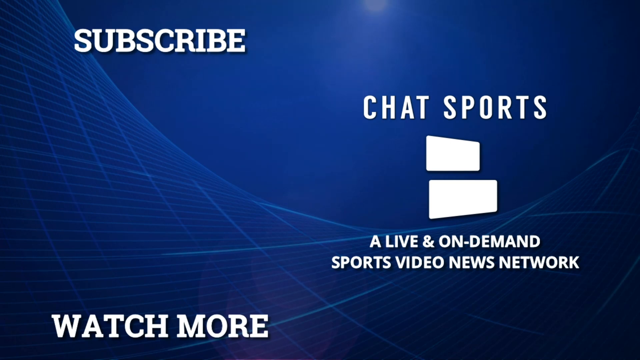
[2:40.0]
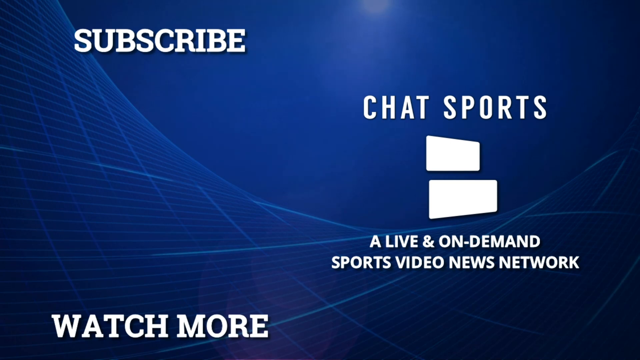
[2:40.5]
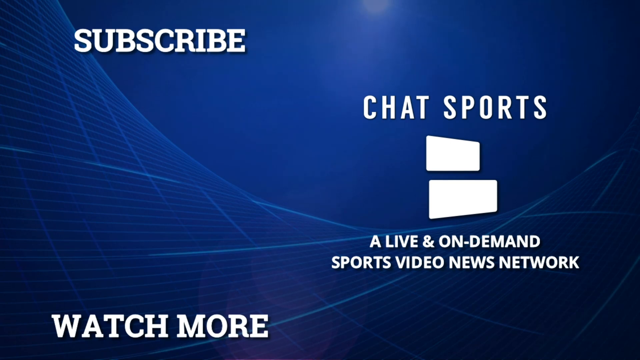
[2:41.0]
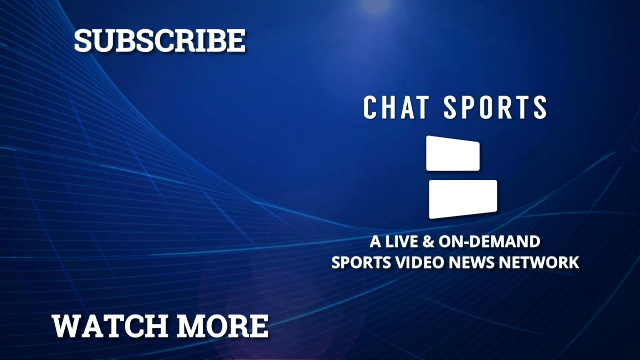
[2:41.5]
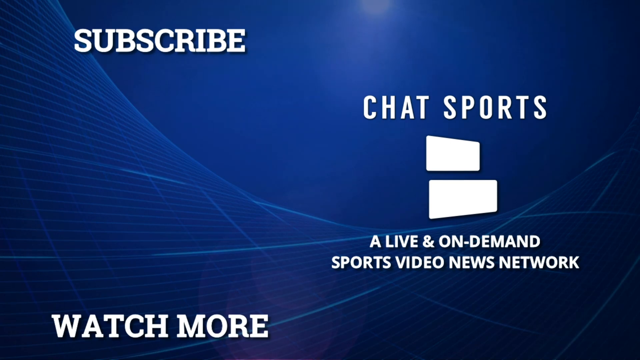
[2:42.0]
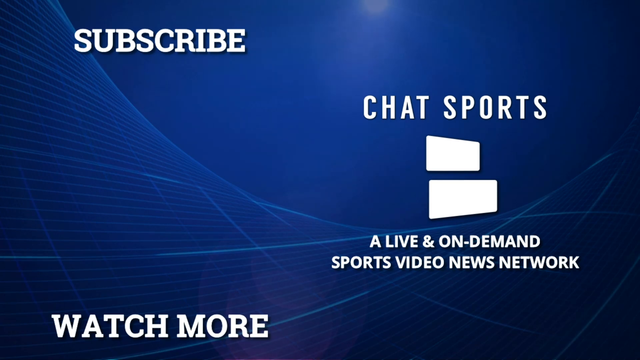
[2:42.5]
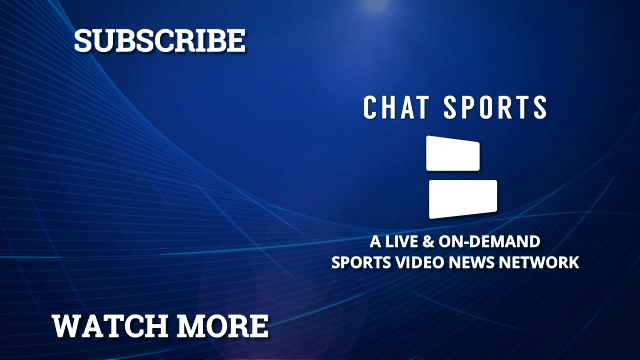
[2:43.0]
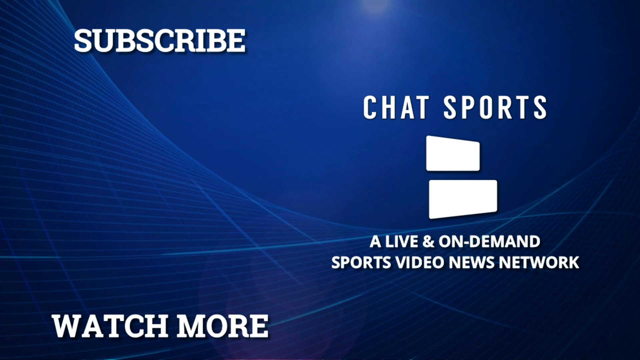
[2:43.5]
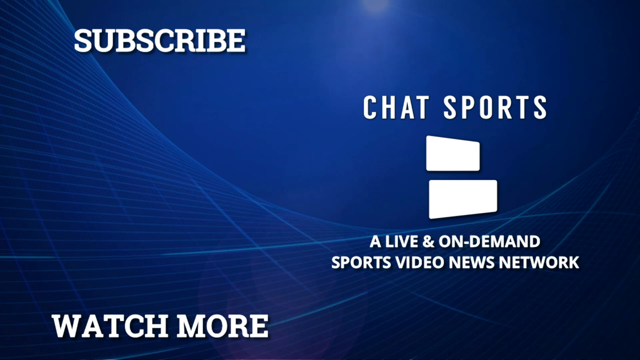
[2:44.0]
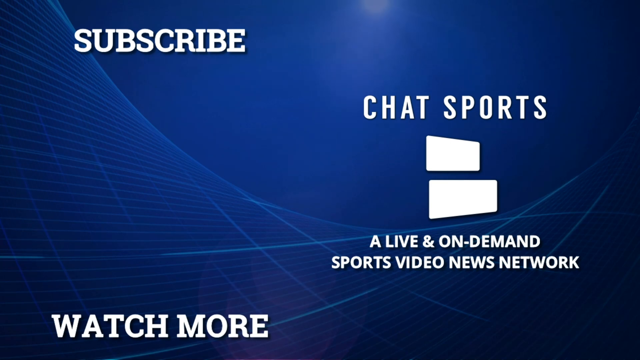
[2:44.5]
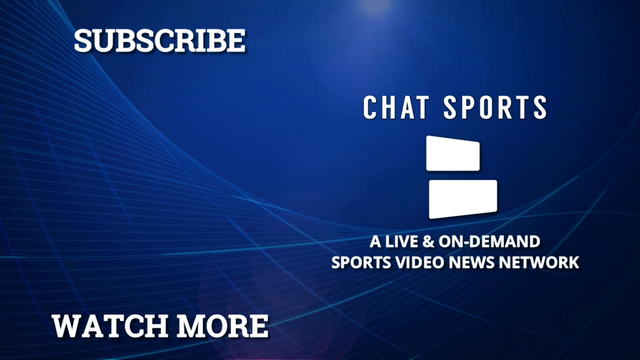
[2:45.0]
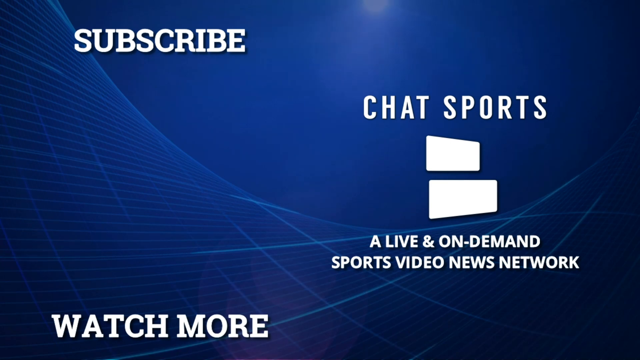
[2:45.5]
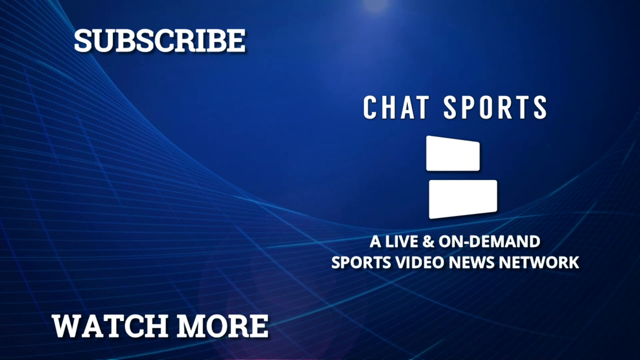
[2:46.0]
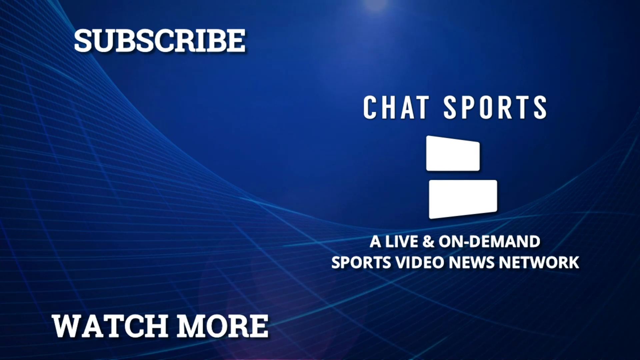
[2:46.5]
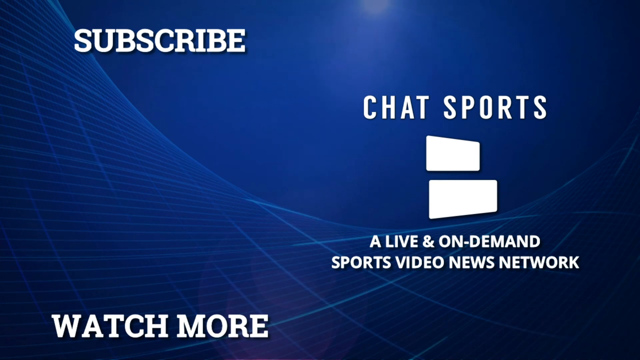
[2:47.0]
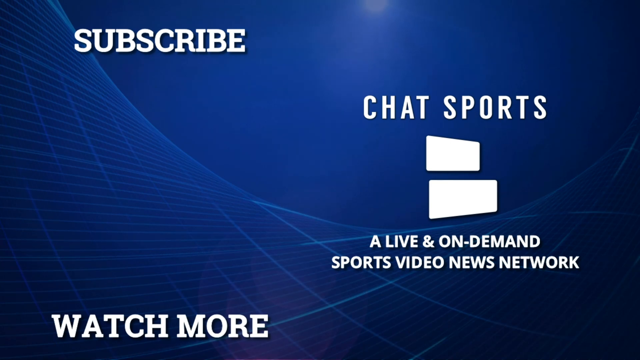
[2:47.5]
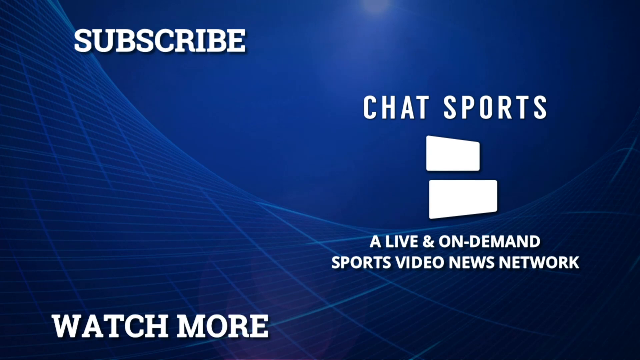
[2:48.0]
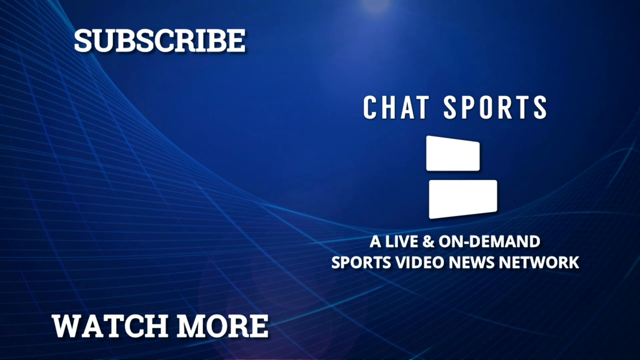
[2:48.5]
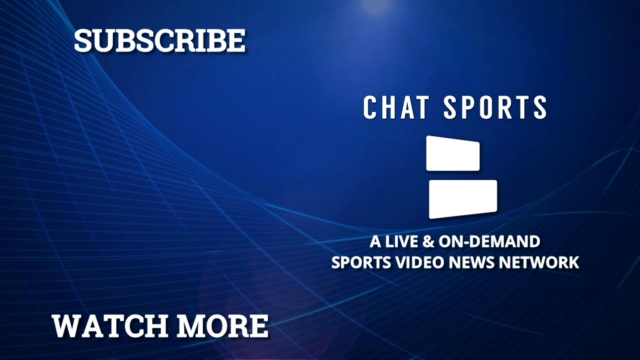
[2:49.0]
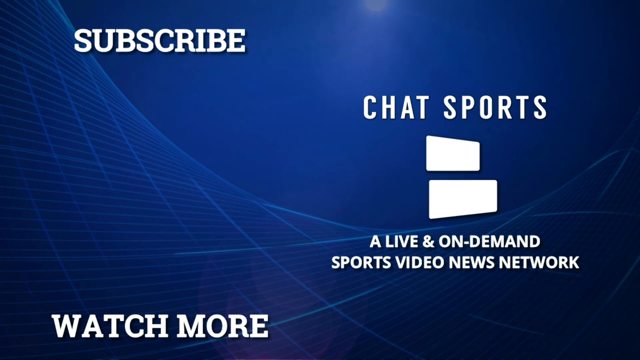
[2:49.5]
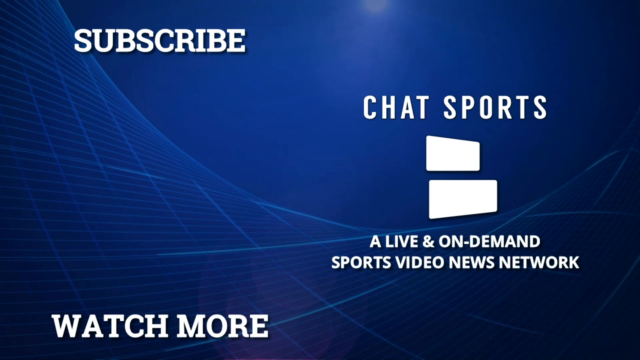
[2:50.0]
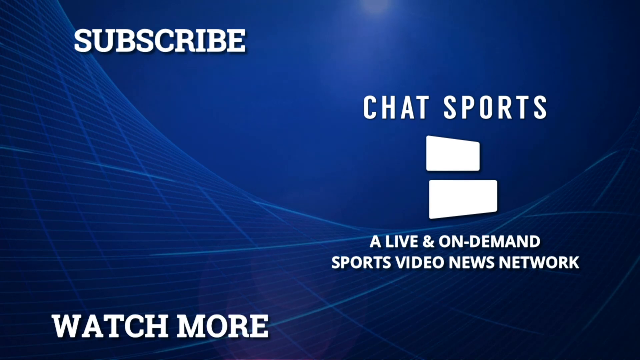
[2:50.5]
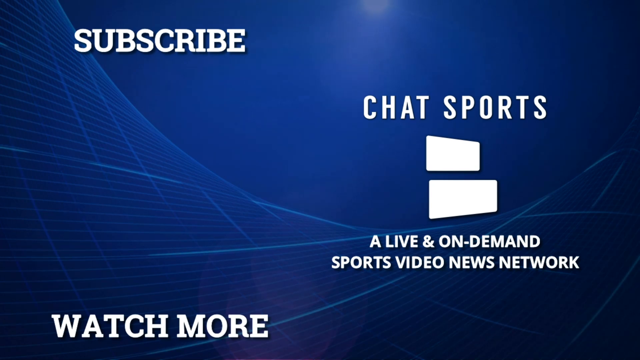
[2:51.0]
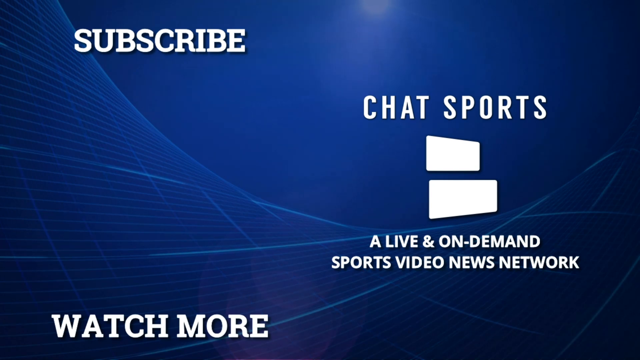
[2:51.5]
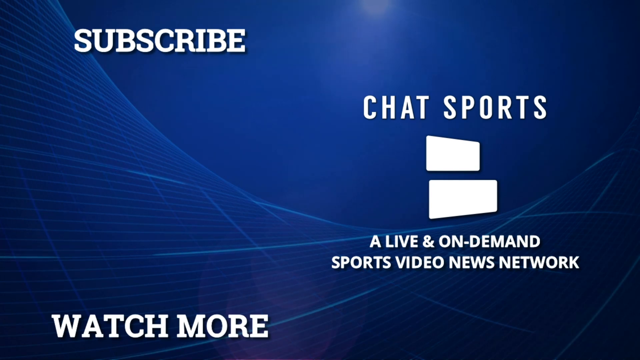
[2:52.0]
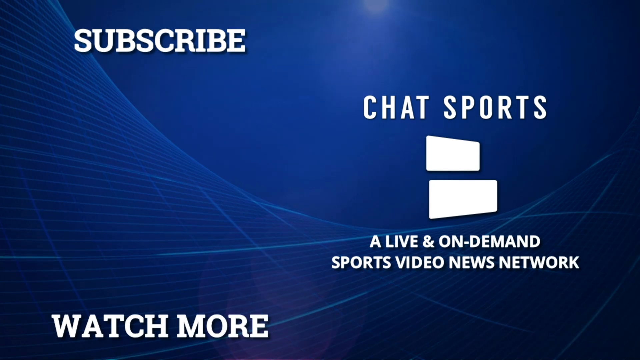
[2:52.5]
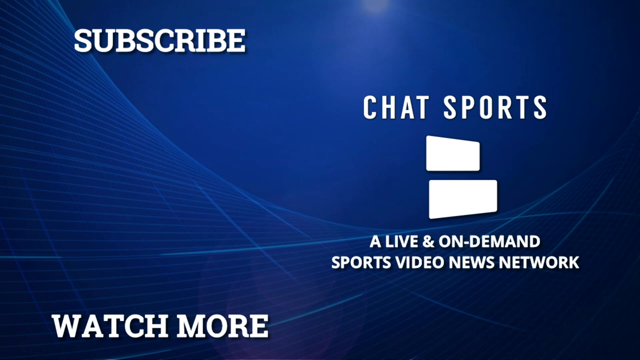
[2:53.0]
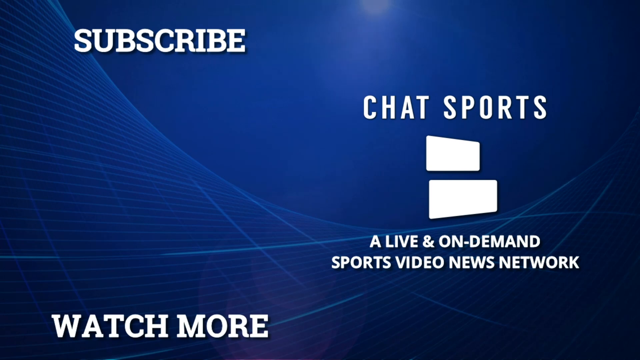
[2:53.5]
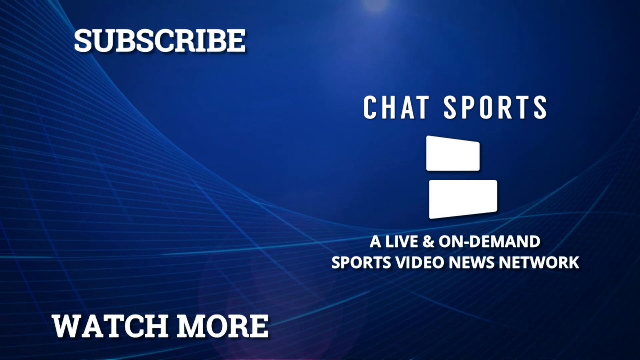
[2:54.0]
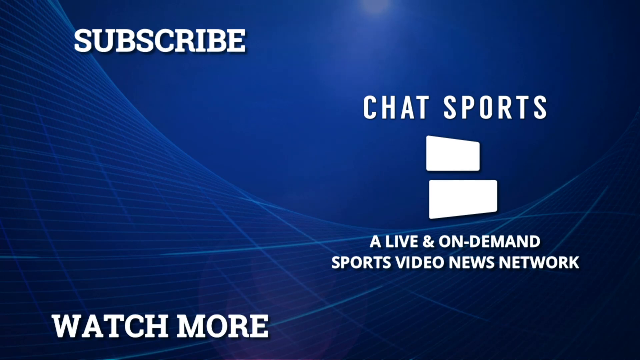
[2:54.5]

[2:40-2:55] The video stays on a subscribe page for Chat Sports, with two white lines underneath the name and "a live and on-demand sports video news network" on the right-hand side. At the bottom left it reads "watch more". The lettering is white on a navy blue background that is not solid but has a curved pattern with vertical and horizontal lines.